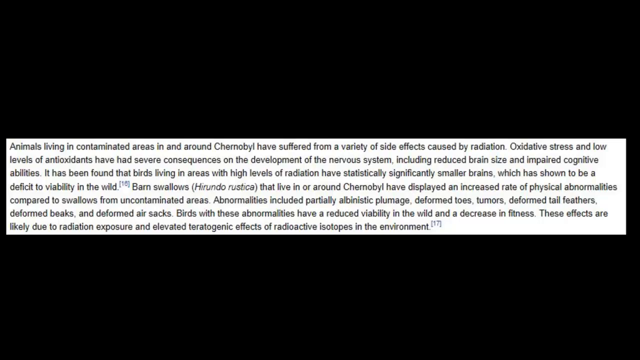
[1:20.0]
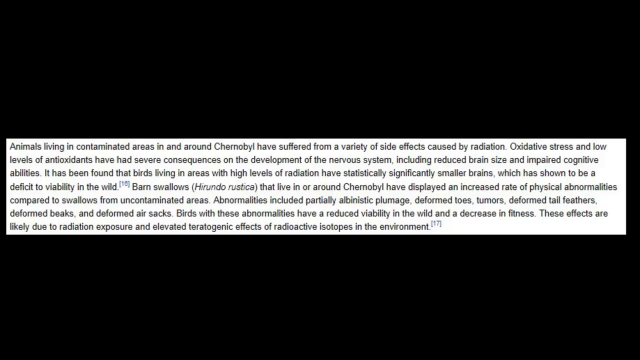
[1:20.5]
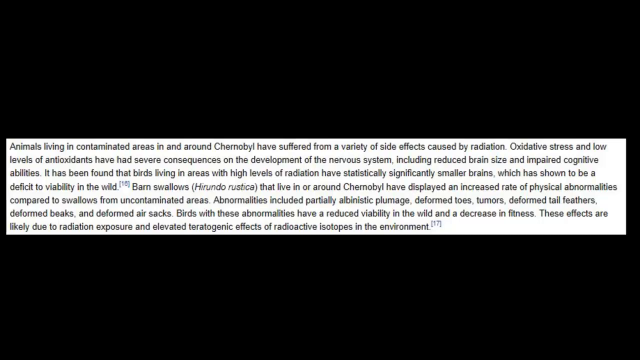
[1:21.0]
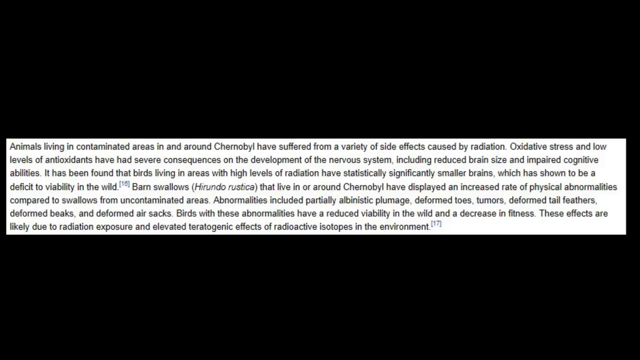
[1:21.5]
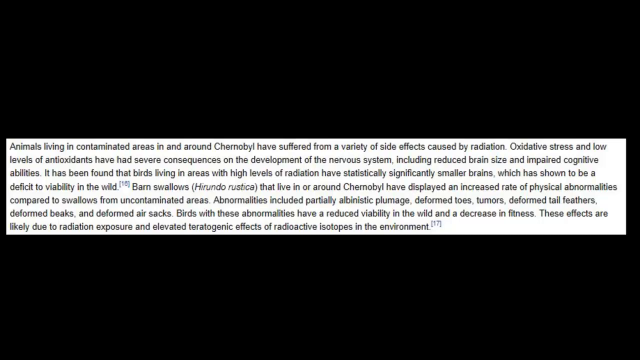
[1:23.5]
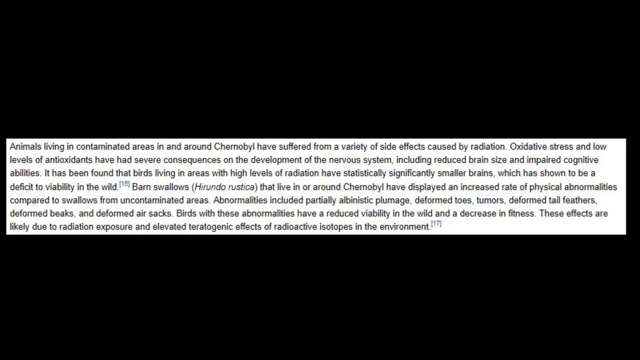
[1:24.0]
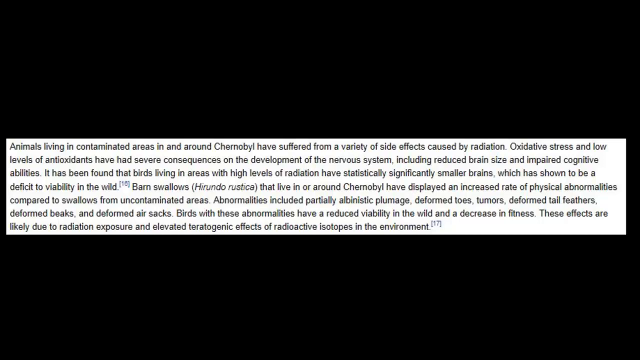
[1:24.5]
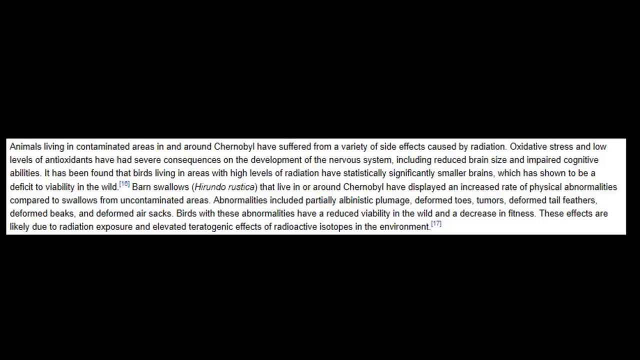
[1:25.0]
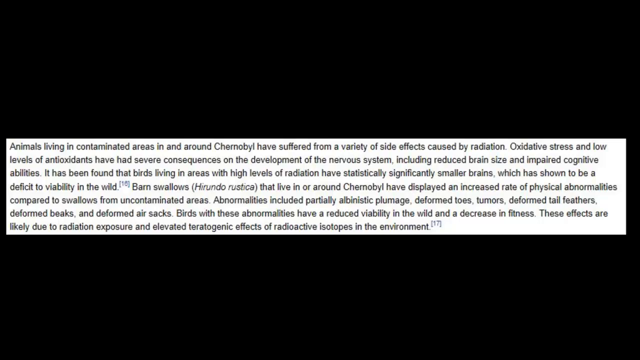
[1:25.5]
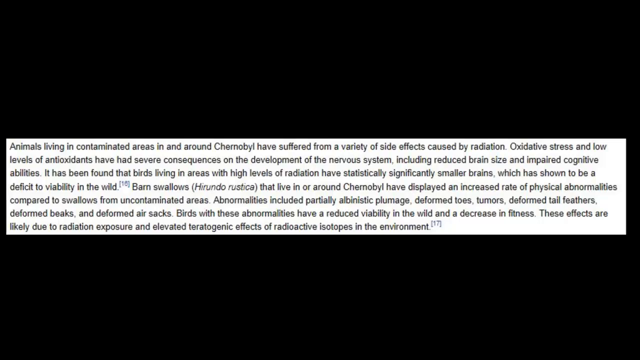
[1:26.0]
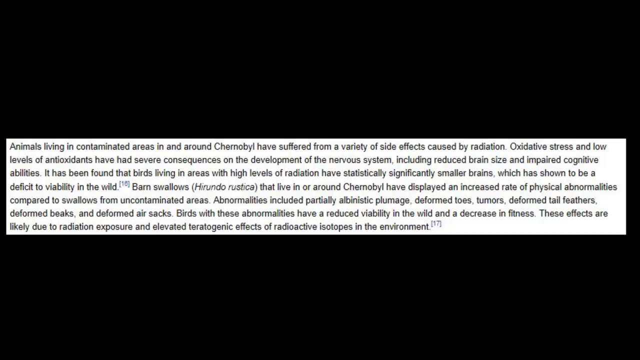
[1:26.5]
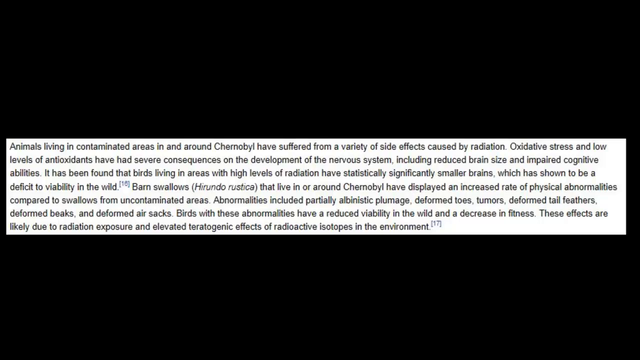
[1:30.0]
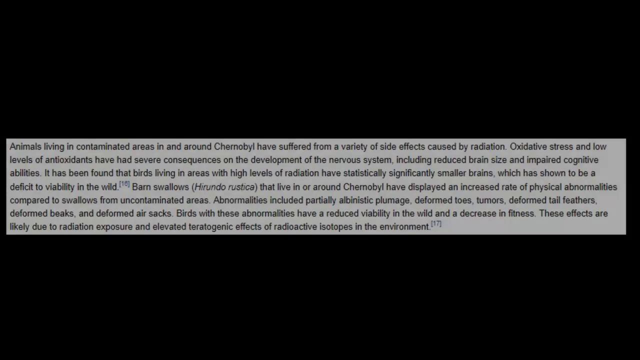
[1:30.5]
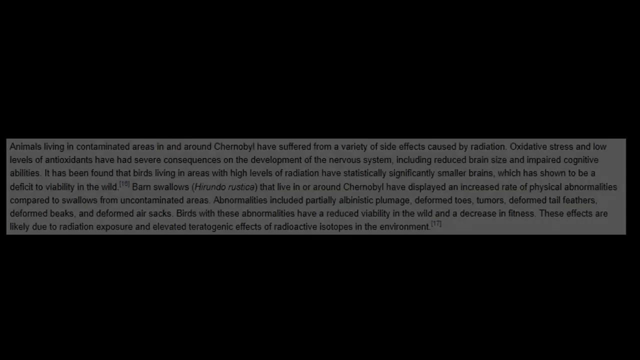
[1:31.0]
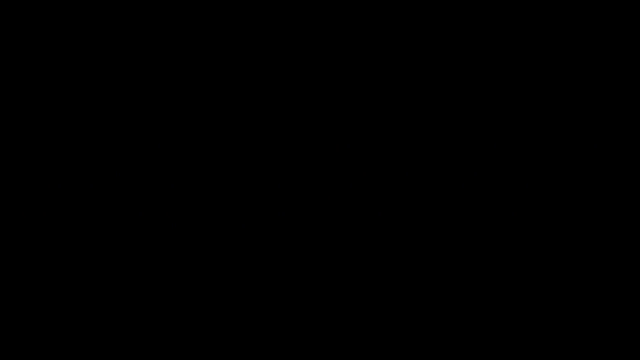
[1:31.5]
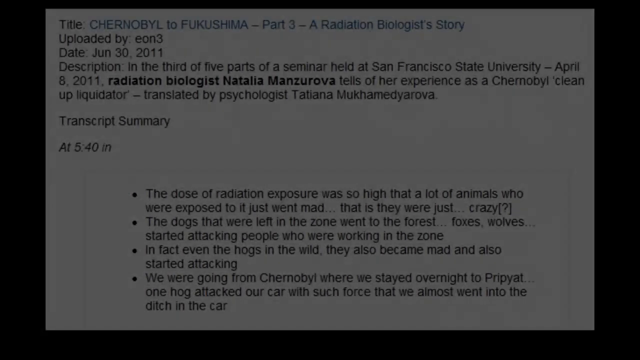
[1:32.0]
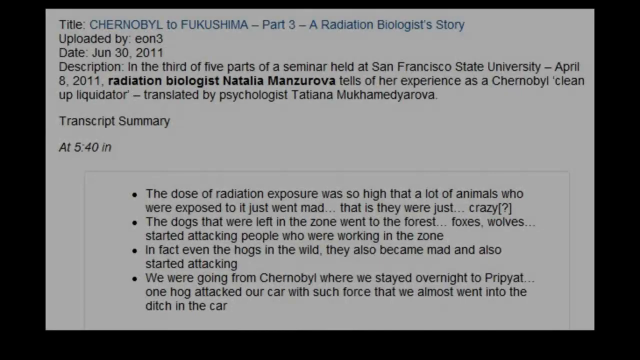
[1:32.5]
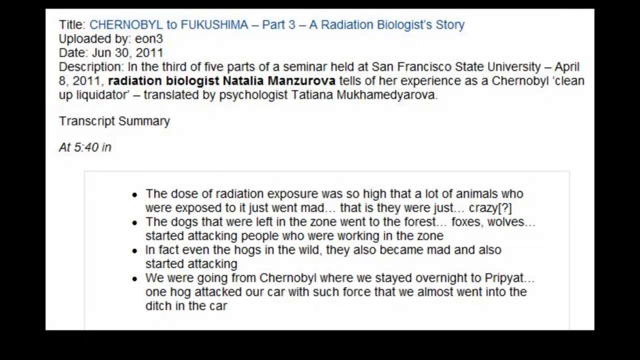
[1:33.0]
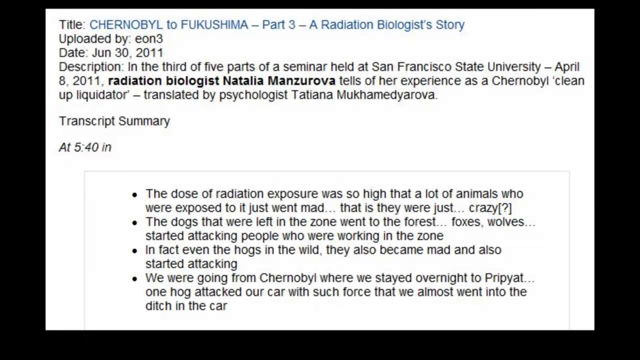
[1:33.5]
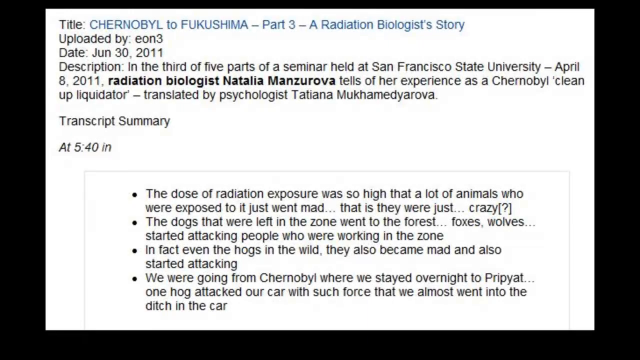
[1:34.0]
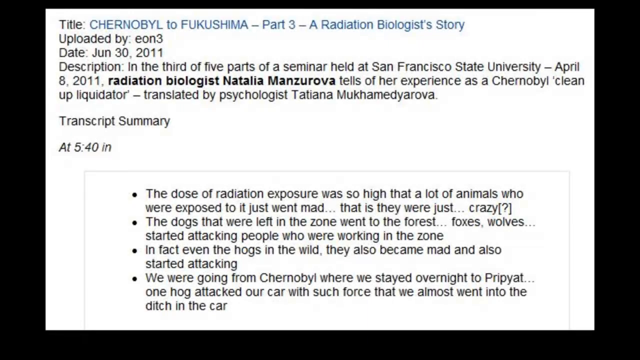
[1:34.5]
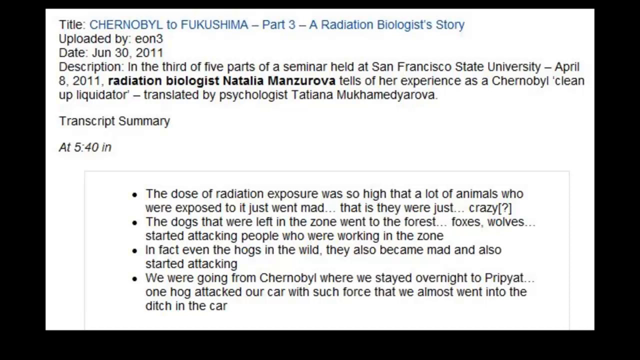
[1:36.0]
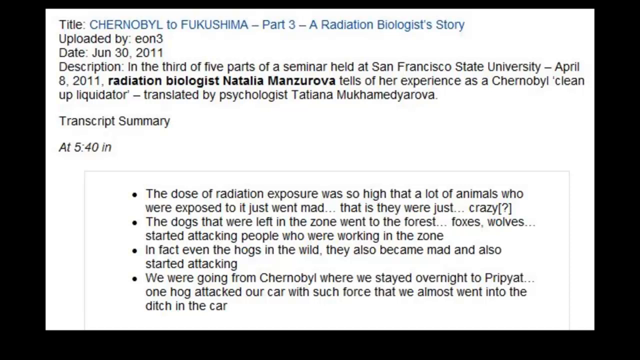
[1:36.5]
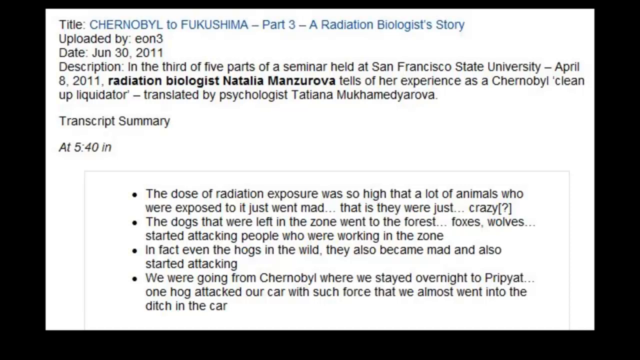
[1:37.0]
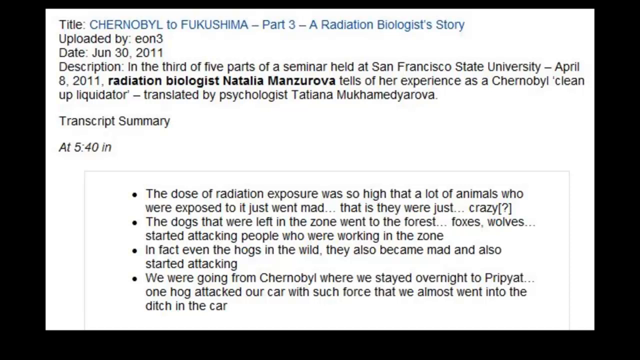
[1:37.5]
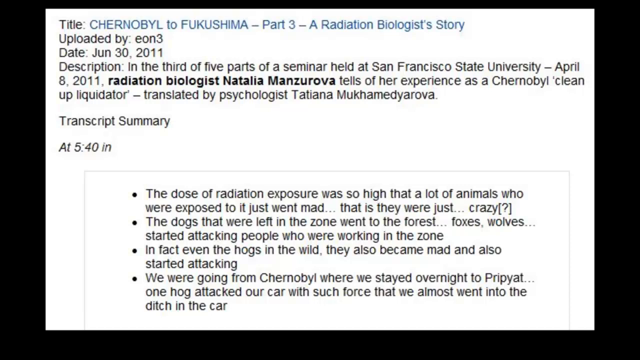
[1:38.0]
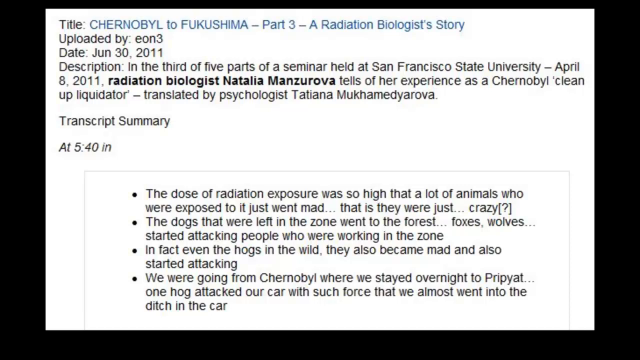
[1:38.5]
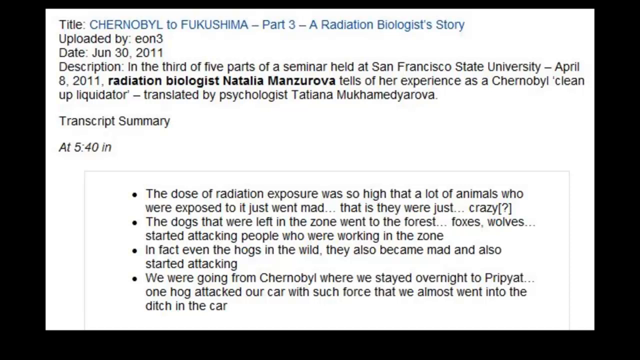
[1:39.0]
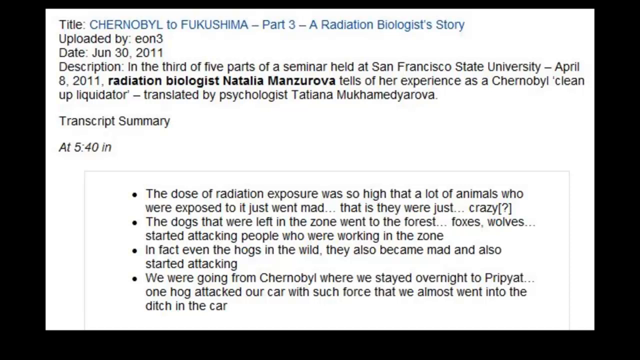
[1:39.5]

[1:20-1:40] A white background with black text appears. The text reads "The dose of radiation exposure was so high that a lot of animals who were exposed just went mad" and "The dogs that were left in the zone went to the forest," and continues about foxes attacking people who were working in the zone, wild animals becoming mad and attacking, and a hog attacking a car on the way from Chernobyl. Text also says "from Chernobyl to Fukushima."